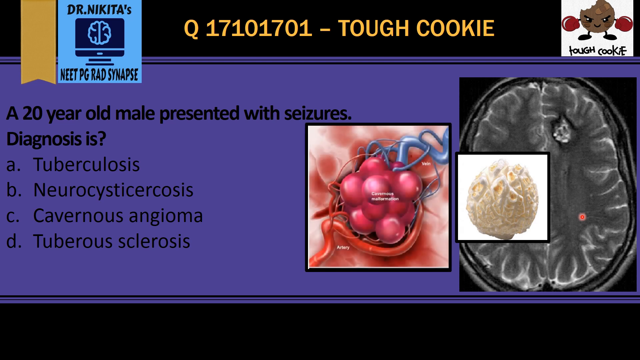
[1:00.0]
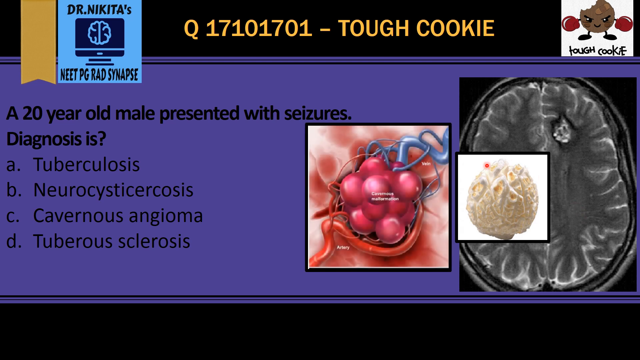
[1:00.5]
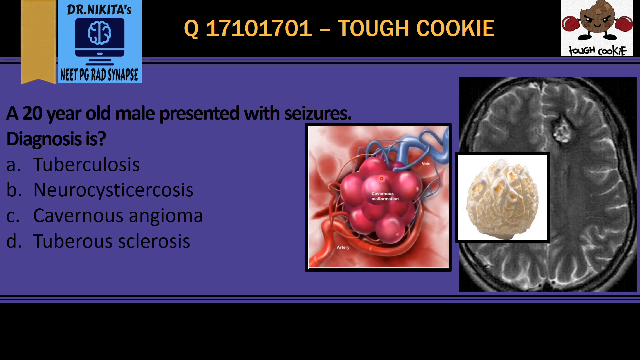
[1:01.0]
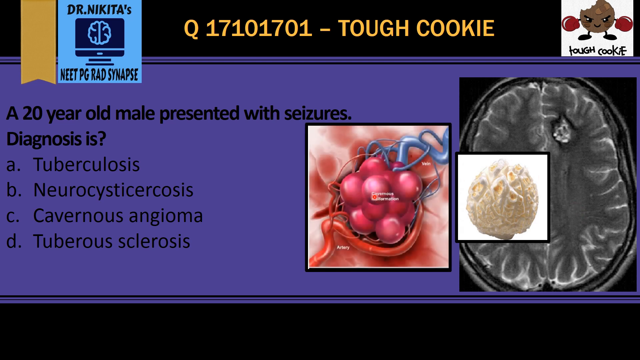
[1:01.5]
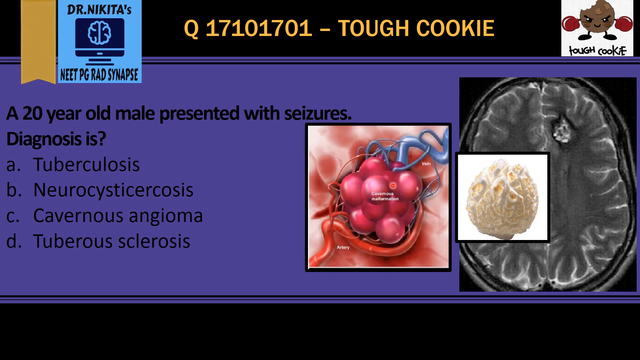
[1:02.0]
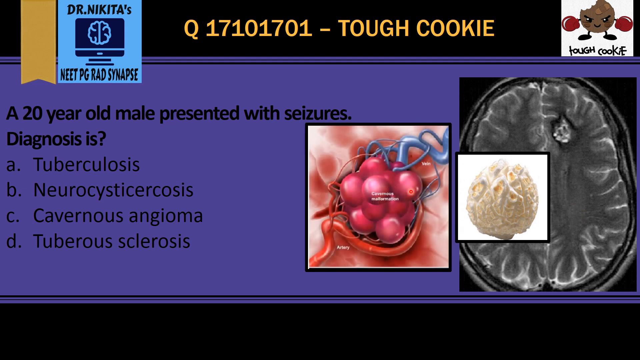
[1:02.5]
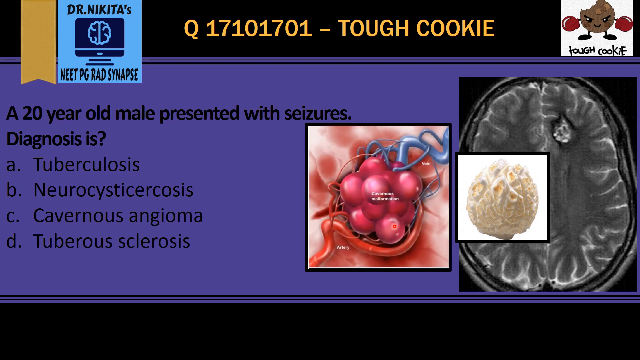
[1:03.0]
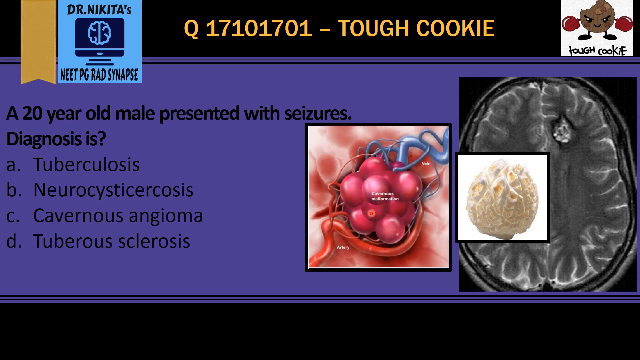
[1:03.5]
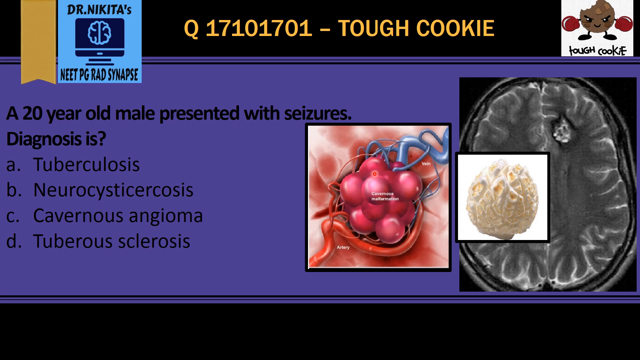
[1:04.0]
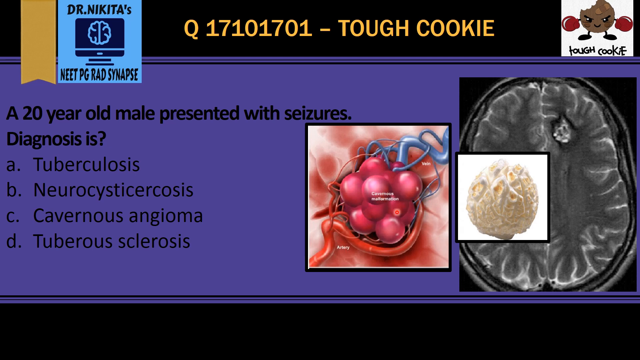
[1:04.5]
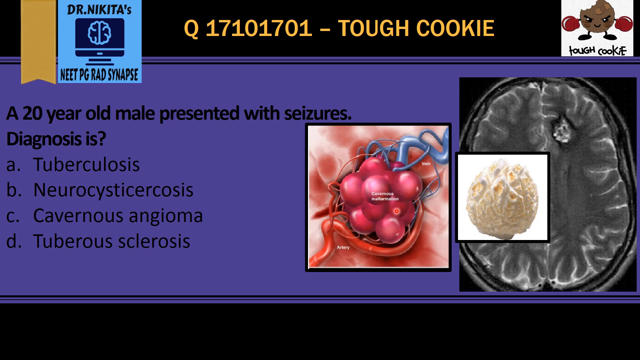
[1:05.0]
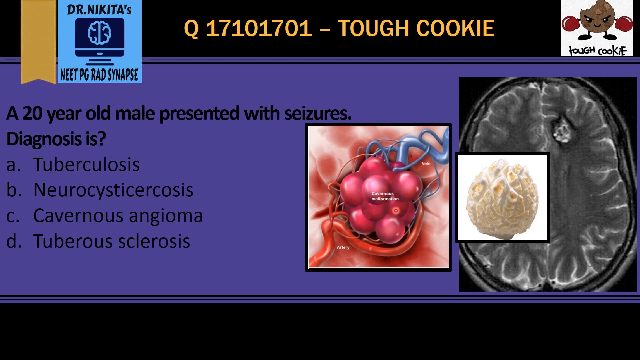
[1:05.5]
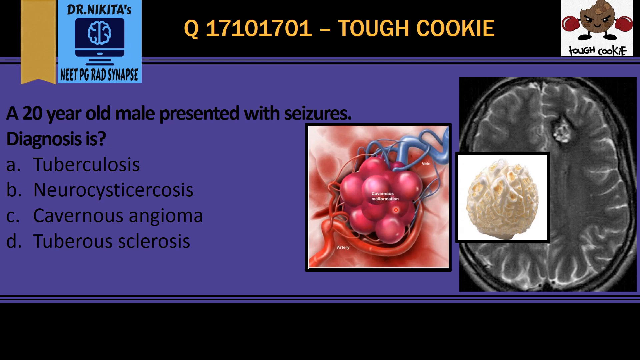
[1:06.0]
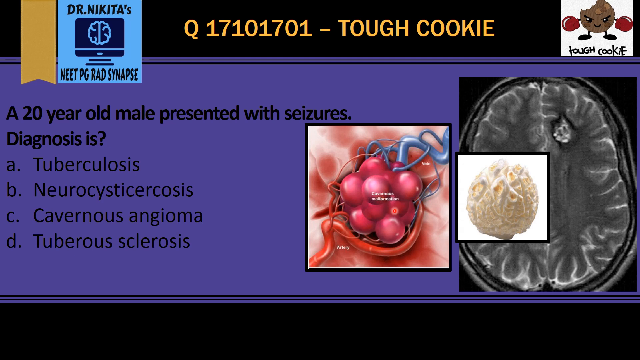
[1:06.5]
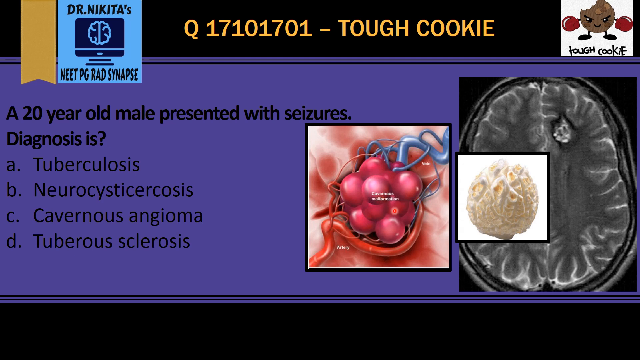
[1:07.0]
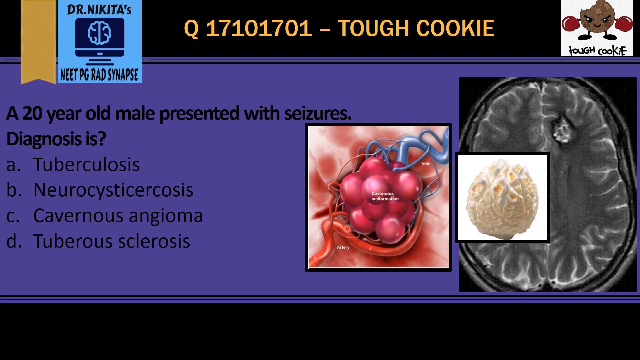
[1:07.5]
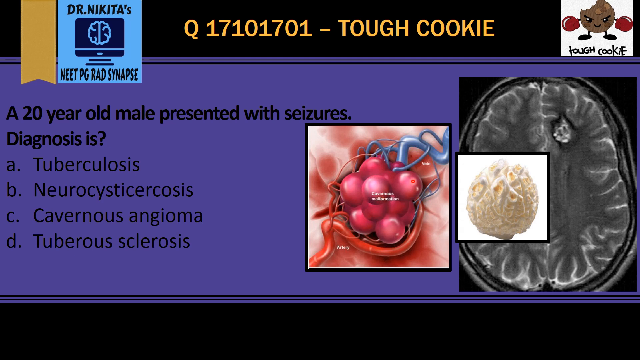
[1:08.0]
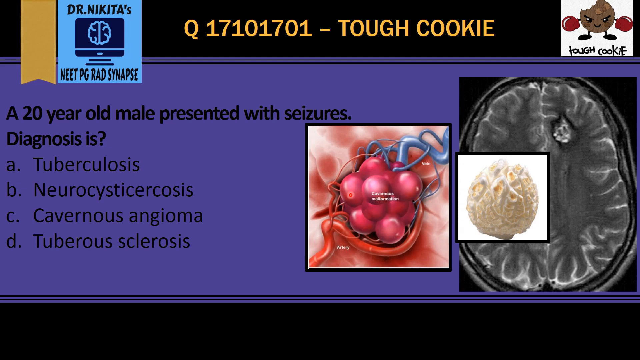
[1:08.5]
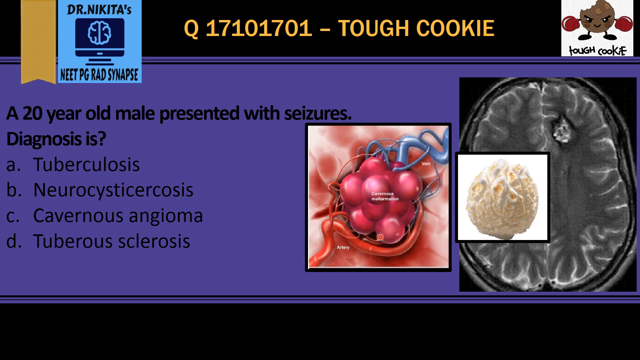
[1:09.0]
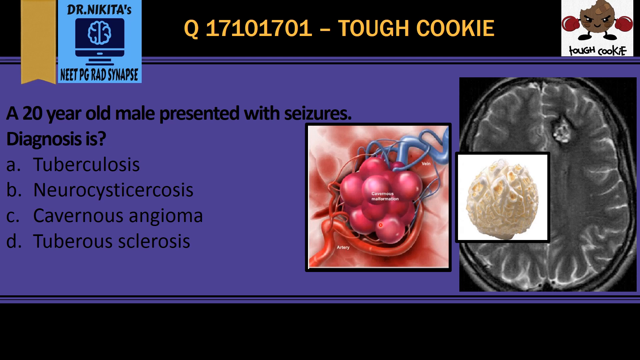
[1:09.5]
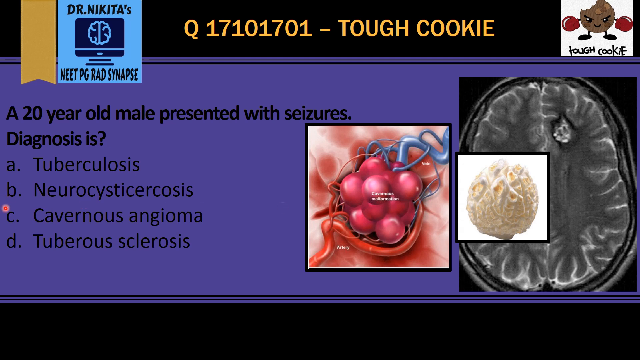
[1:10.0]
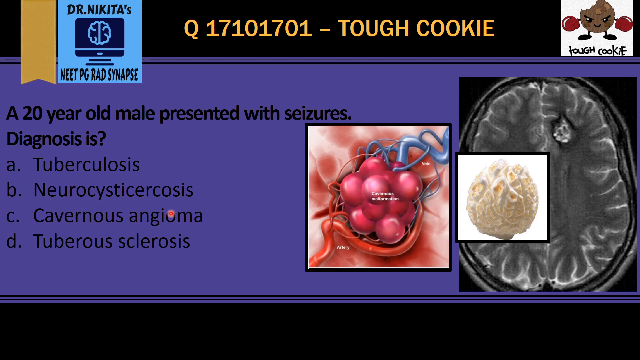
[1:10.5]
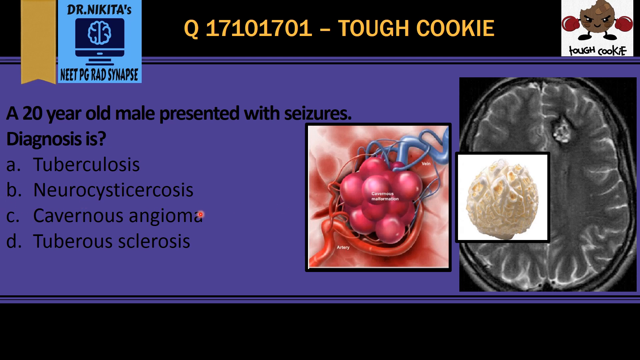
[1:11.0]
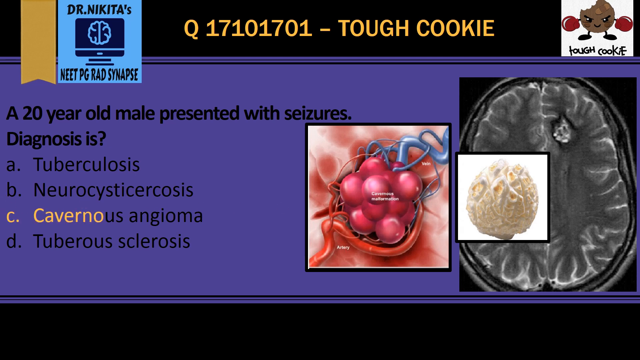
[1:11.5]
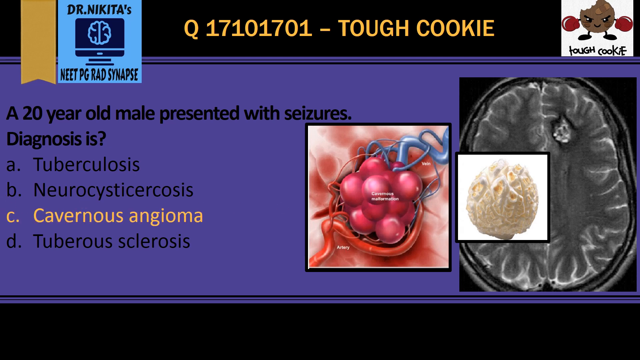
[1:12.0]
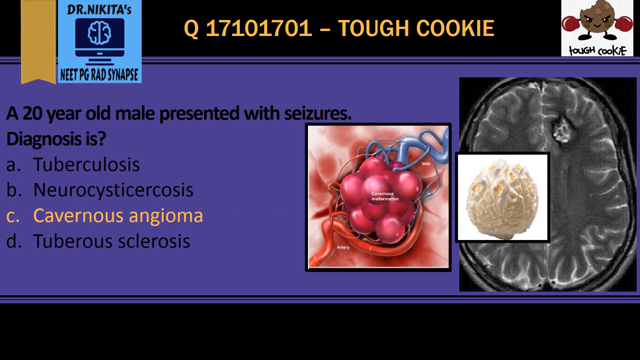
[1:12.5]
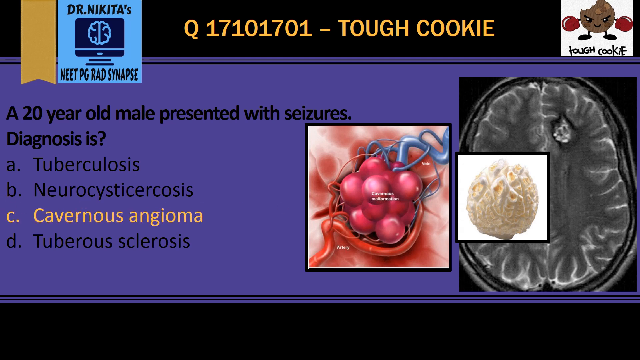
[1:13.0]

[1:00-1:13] The graphic shows the clusters with the veins and arteries coming from them, and the cluster of balls almost looks like it is against a white and pink background. It seems to be something that is not meant to be in the brain. After circling around and pointing to the graphic, the cursor moves to the answers and eventually hovers over the cavernous angioma option. The option is then highlighted from left to right, its font changing to a yellow color, indicating that it is the correct answer. The video ends there.